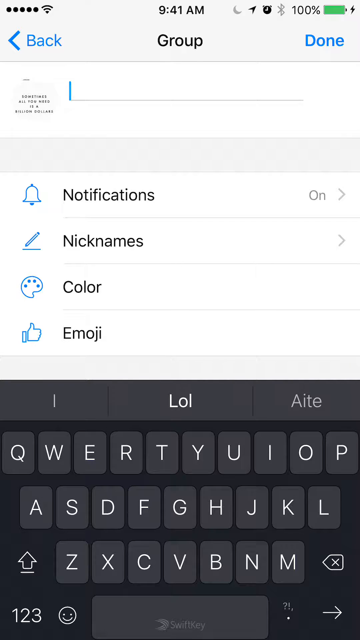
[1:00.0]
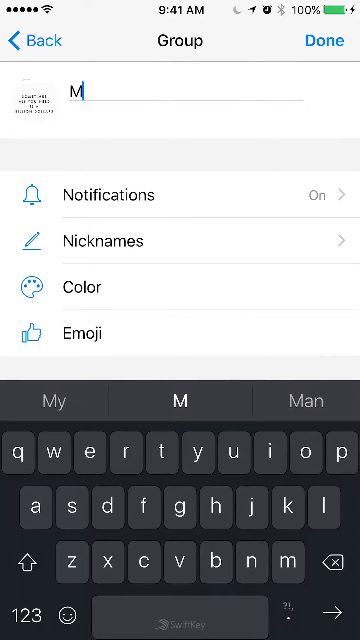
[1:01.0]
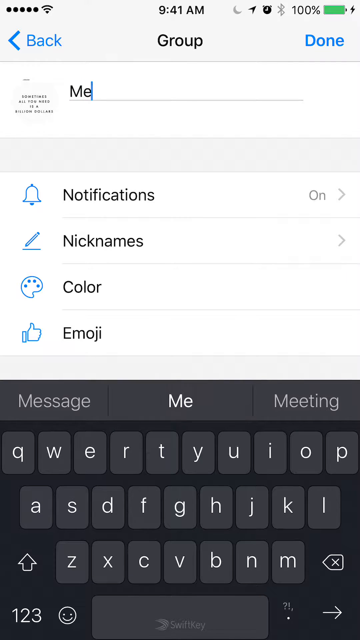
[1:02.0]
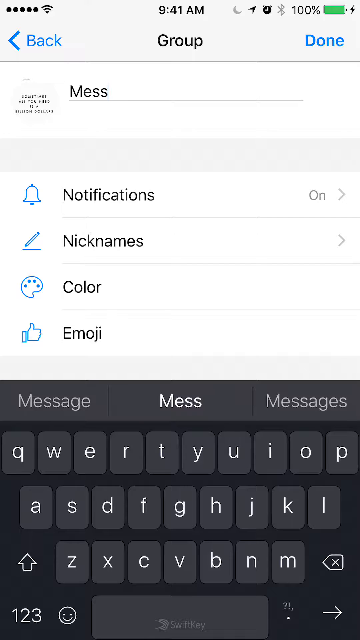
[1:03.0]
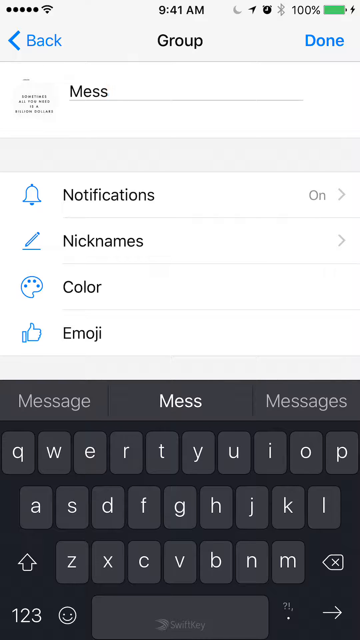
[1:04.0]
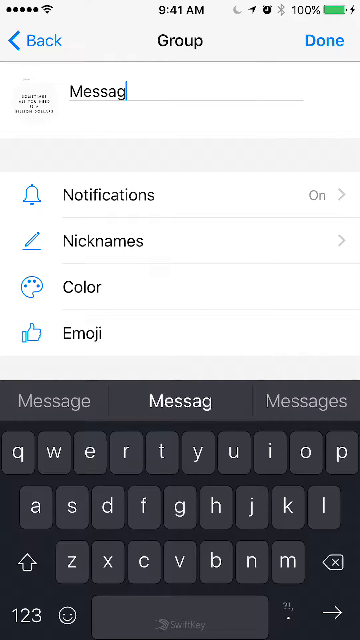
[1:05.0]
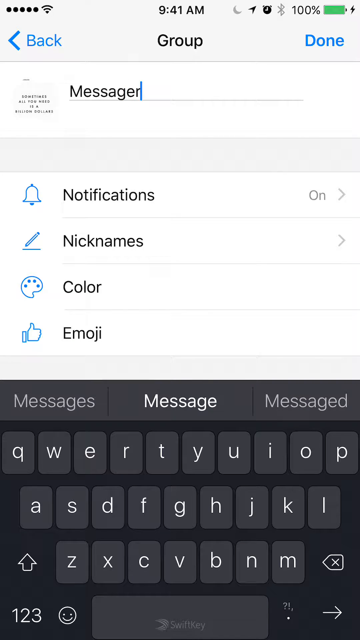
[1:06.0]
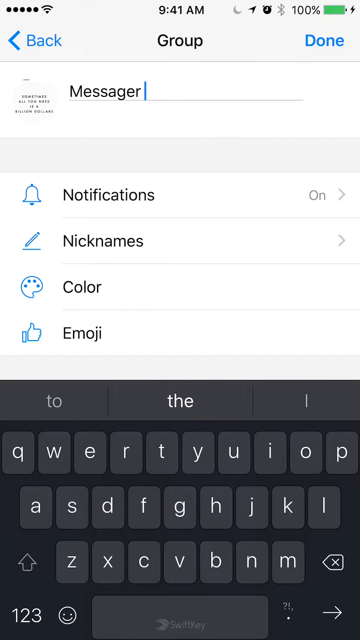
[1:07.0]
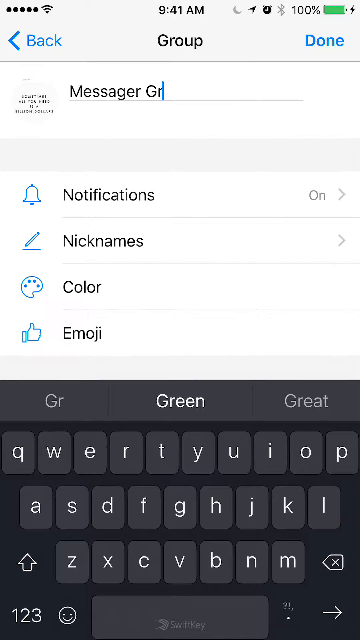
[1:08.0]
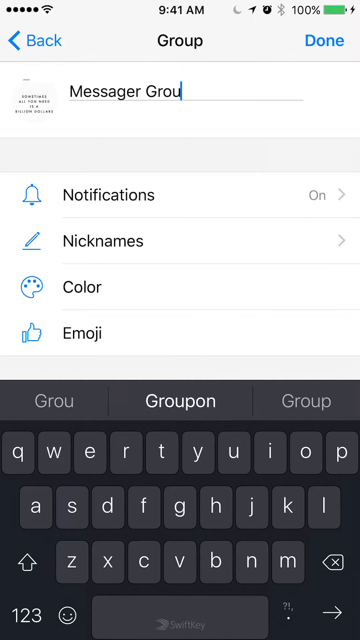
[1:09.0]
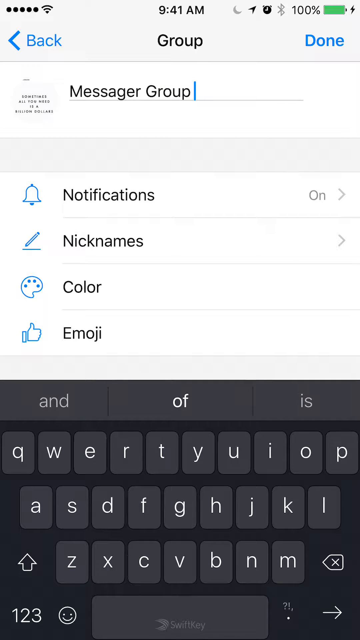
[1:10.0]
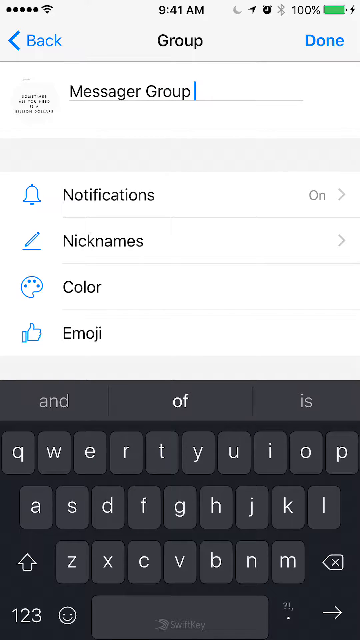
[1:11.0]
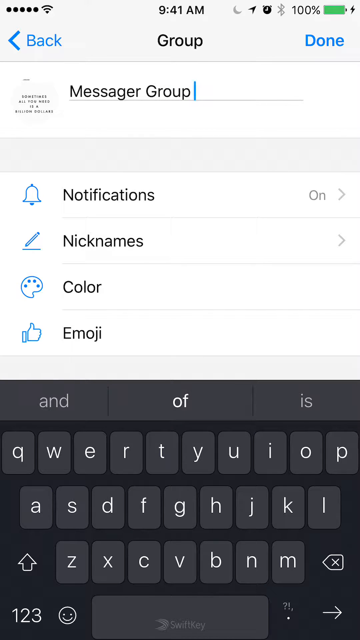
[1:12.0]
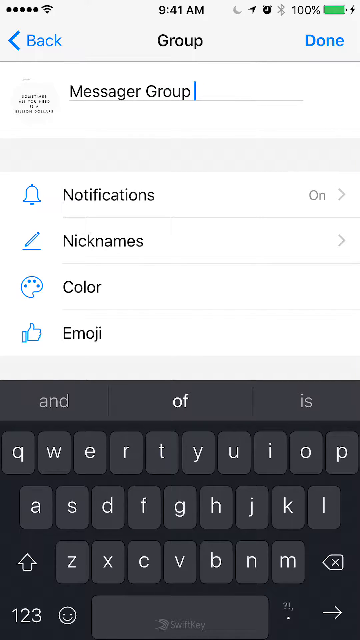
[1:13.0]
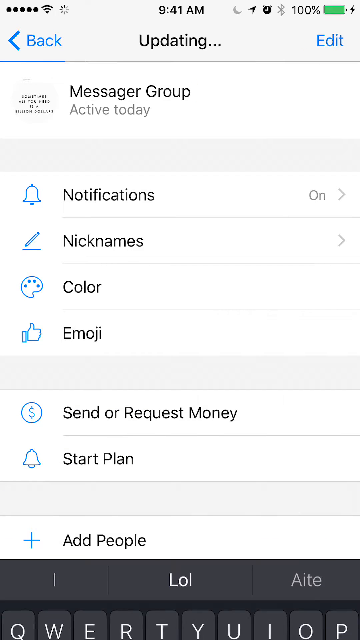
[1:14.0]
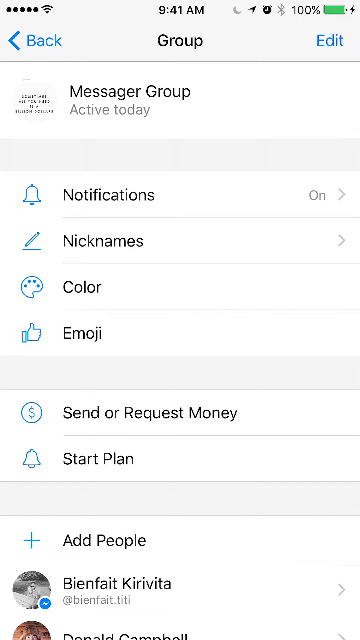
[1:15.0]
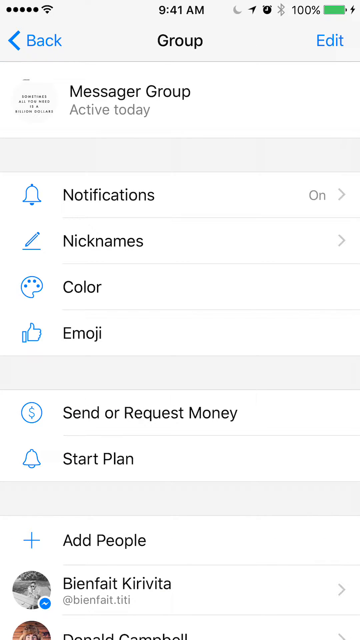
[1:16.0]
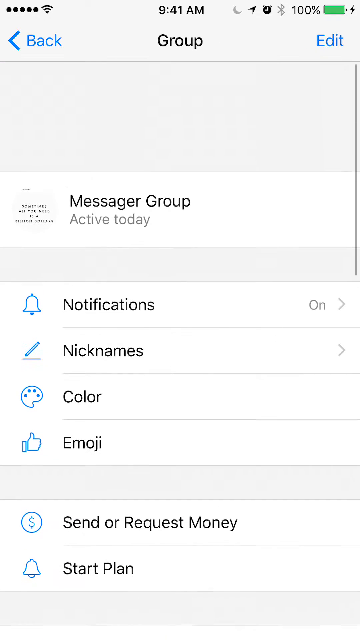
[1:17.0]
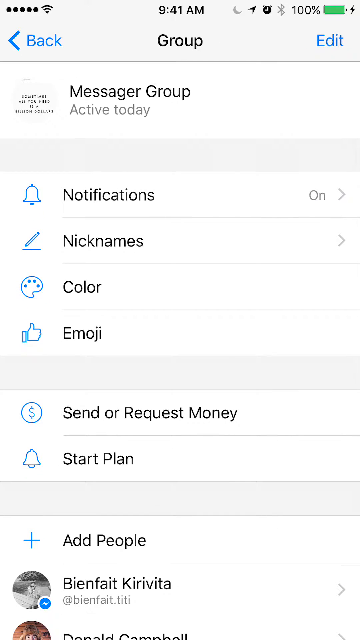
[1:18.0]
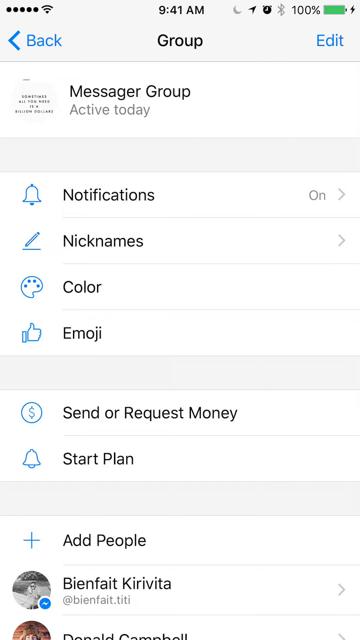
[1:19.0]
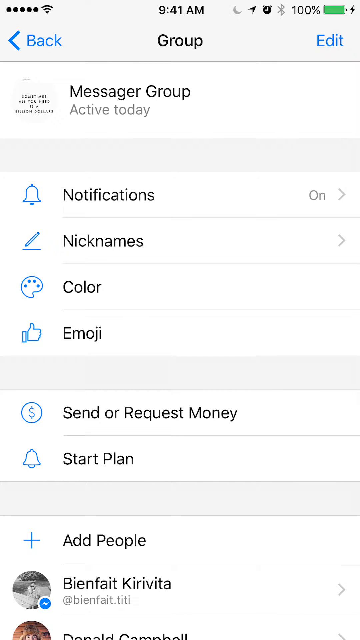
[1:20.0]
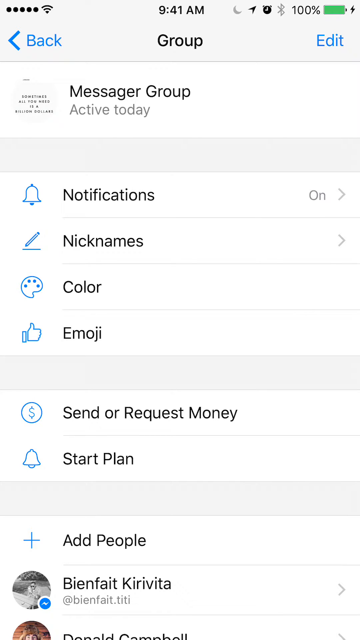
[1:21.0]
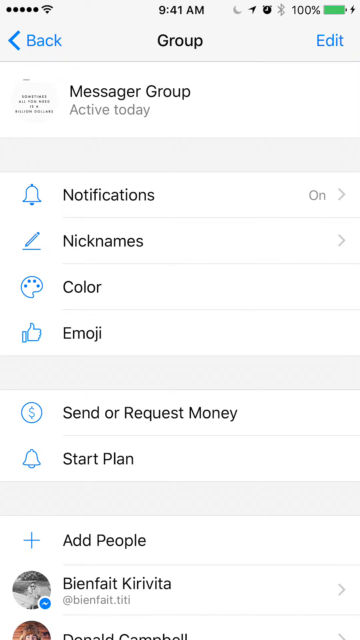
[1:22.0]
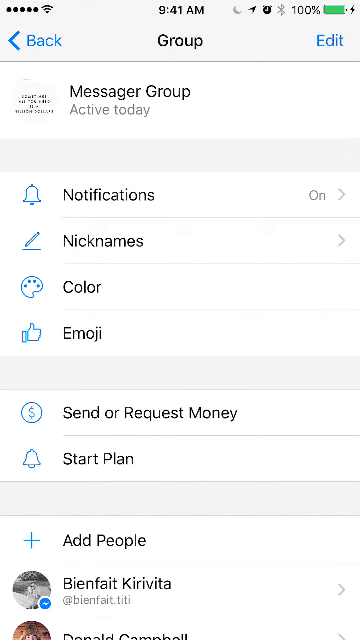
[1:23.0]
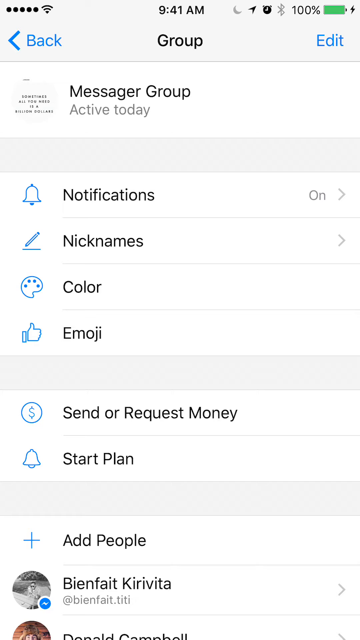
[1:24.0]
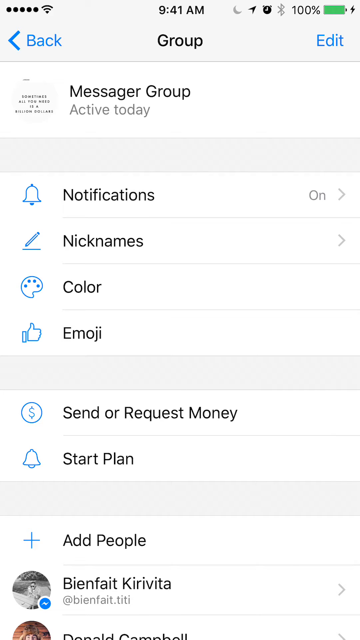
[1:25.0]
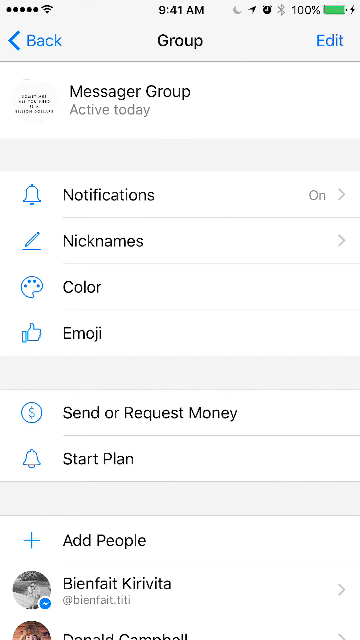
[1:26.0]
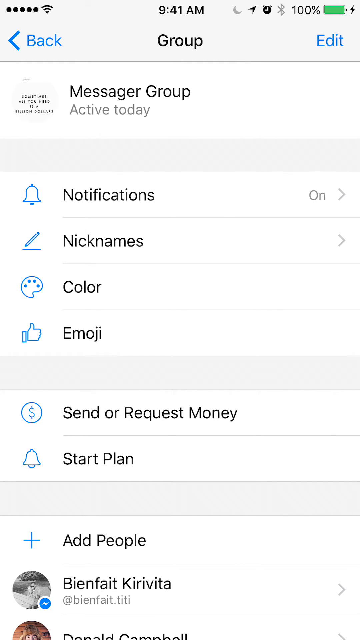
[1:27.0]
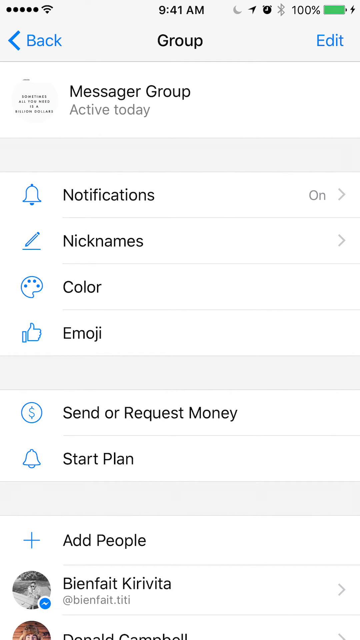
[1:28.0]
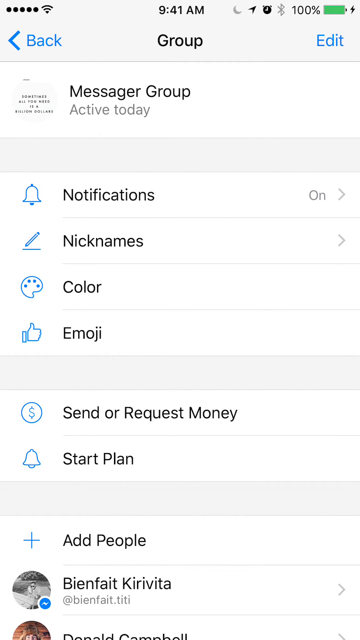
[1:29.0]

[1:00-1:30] The WhatsApp group is still on screen. The name is edited to "Messenger group", and the change goes through successfully. The battery percentage on the screen shows 100%. There is a back button at the top left corner, the group is at the center of the screen, and an edit option is at the top right corner. At the bottom there is a notification icon showing a bell, followed by nickname, colour and emoji options. Further down are options to send and request money and to start a plan.